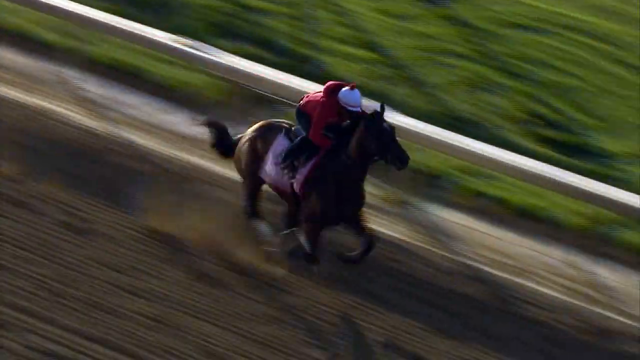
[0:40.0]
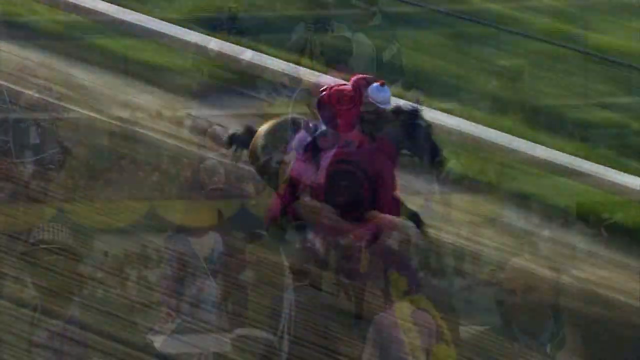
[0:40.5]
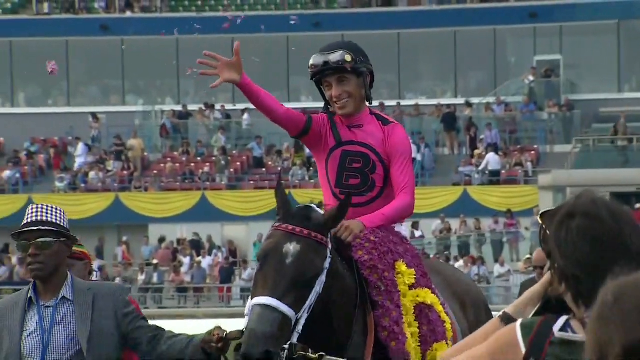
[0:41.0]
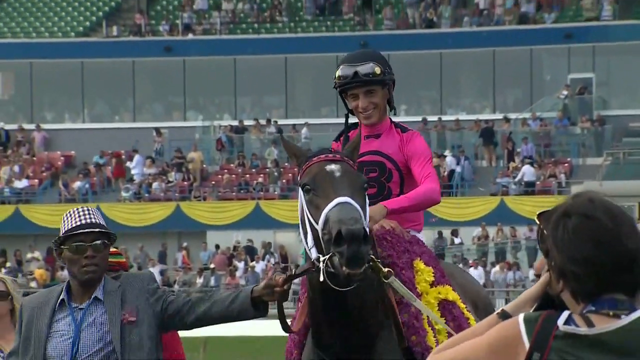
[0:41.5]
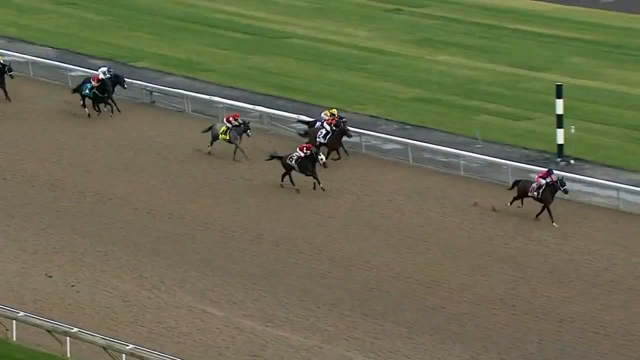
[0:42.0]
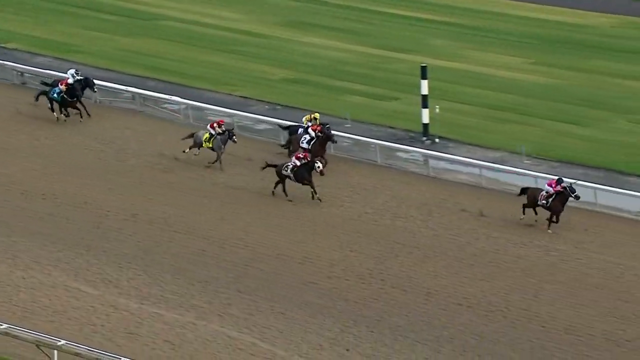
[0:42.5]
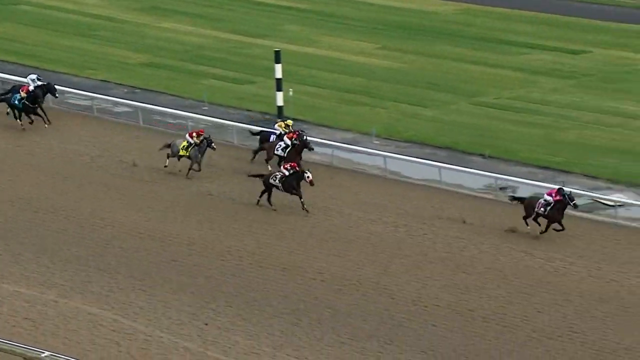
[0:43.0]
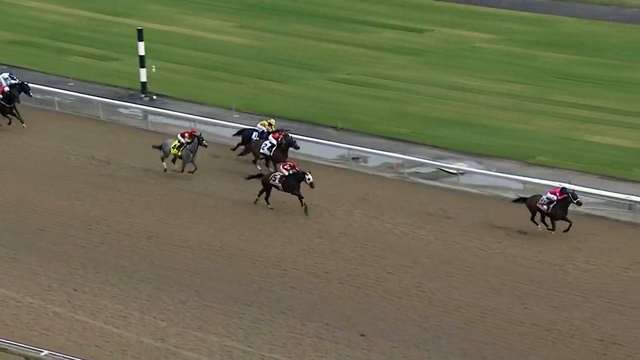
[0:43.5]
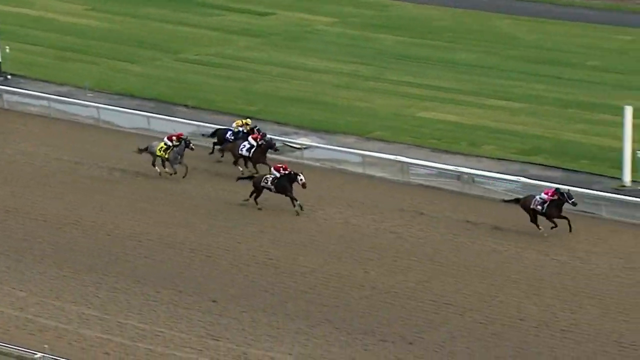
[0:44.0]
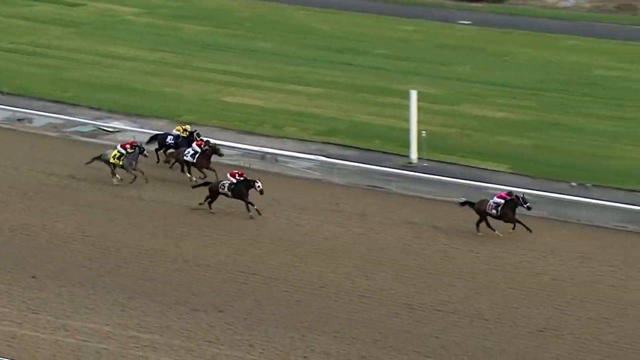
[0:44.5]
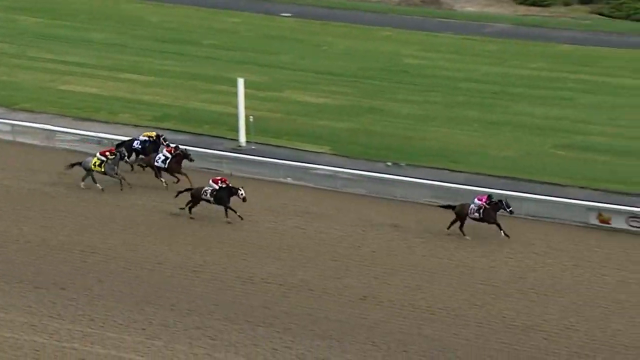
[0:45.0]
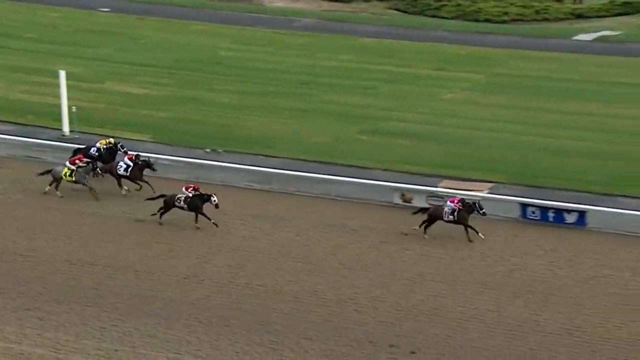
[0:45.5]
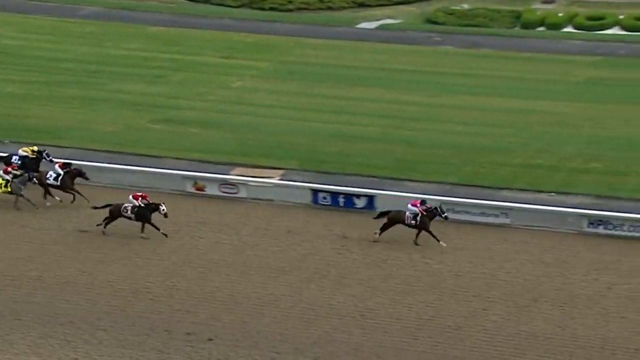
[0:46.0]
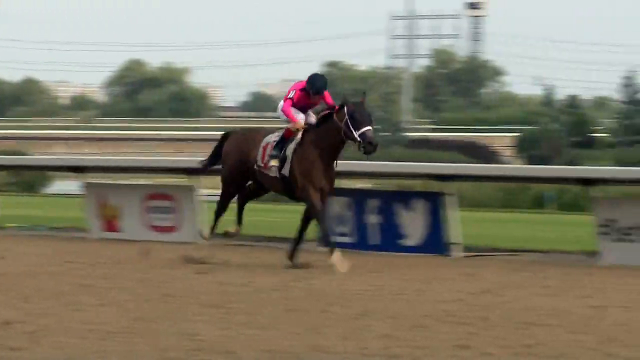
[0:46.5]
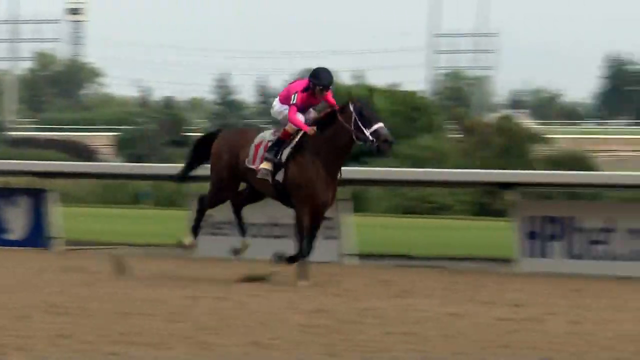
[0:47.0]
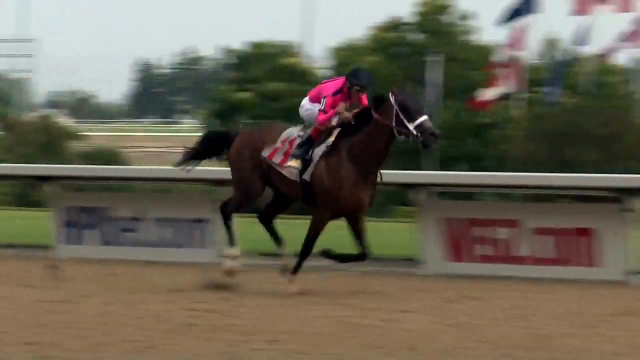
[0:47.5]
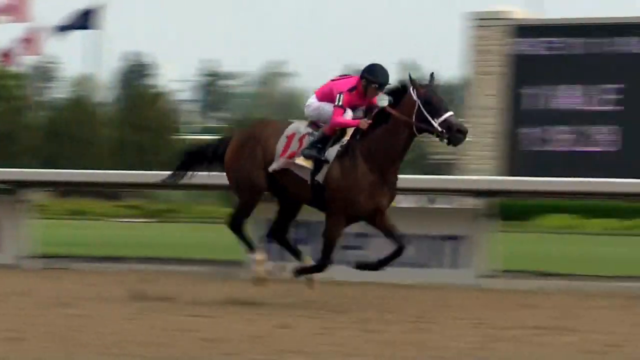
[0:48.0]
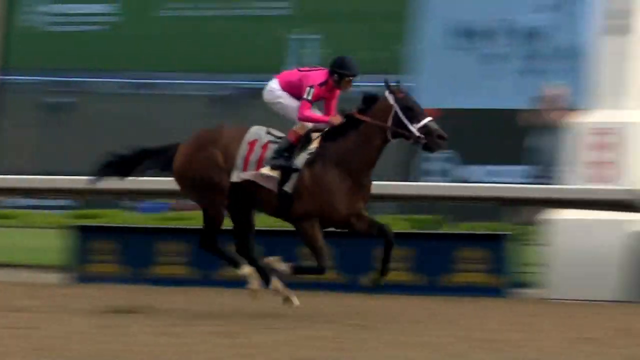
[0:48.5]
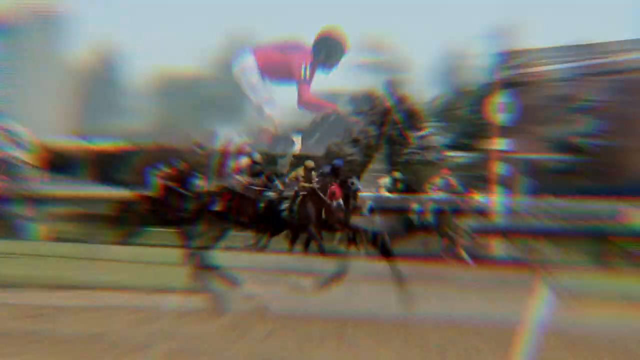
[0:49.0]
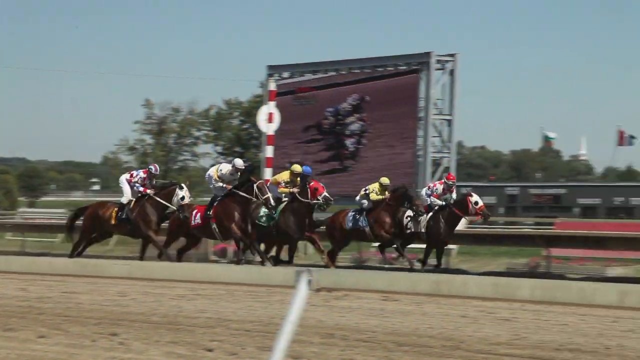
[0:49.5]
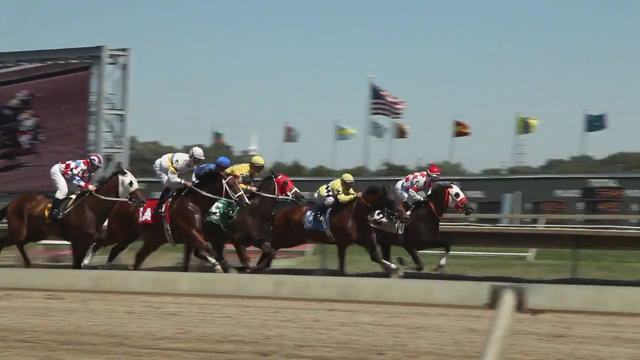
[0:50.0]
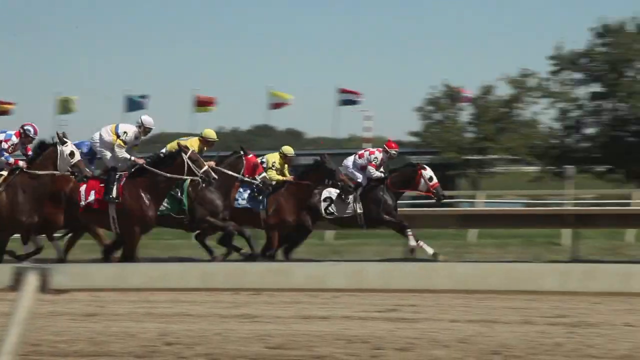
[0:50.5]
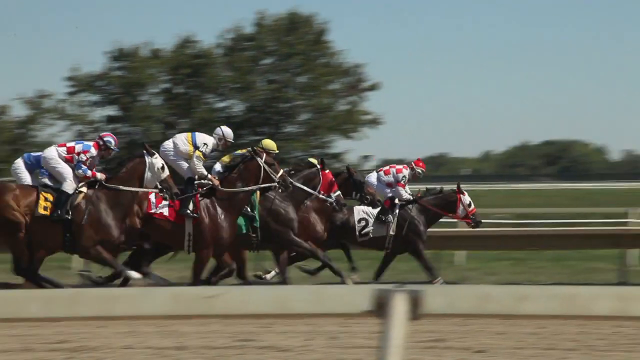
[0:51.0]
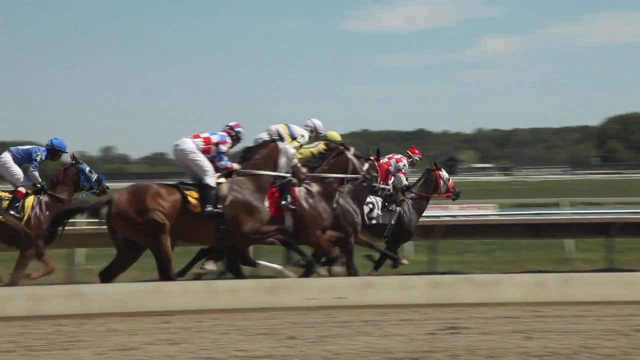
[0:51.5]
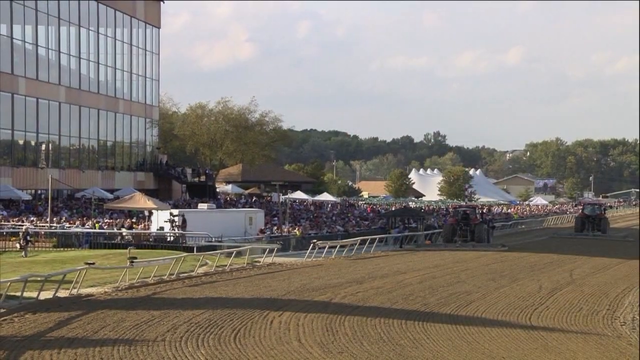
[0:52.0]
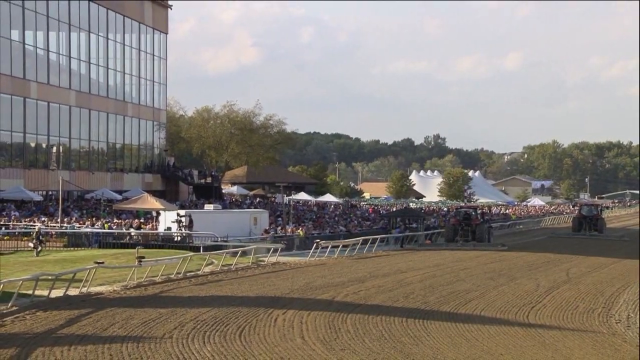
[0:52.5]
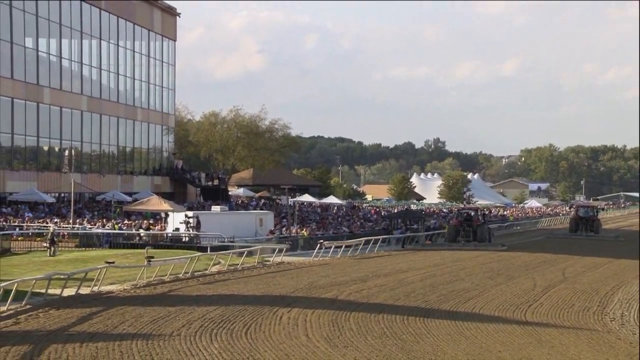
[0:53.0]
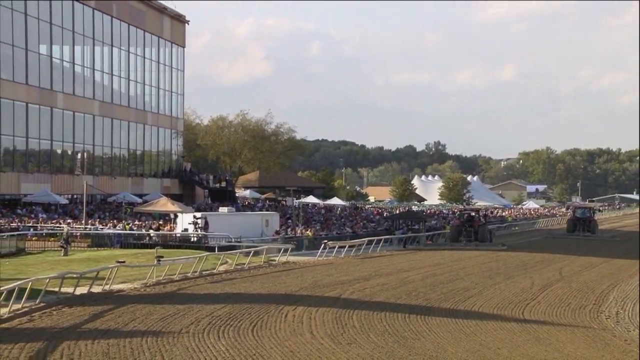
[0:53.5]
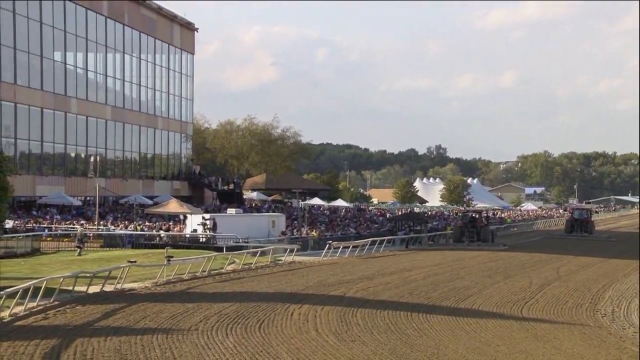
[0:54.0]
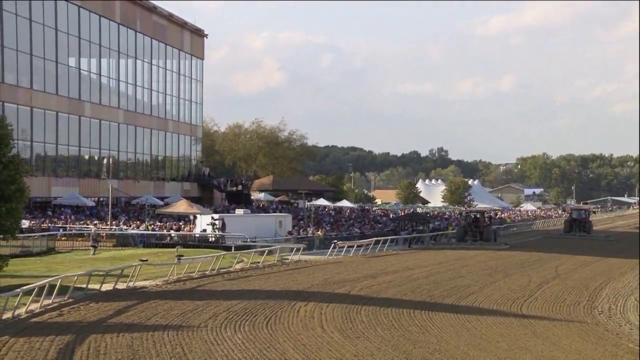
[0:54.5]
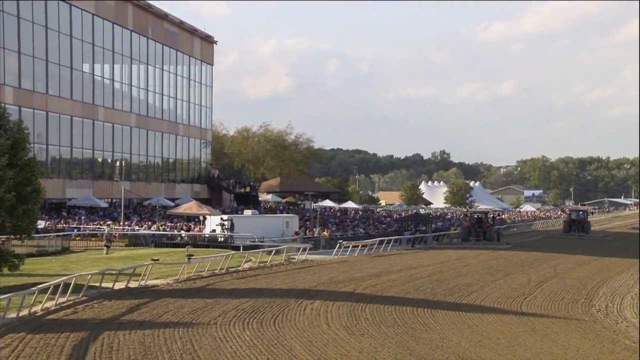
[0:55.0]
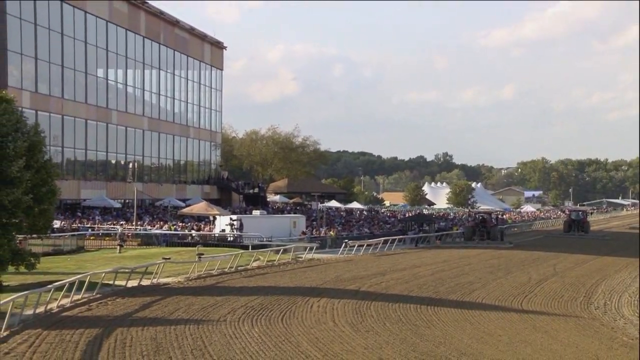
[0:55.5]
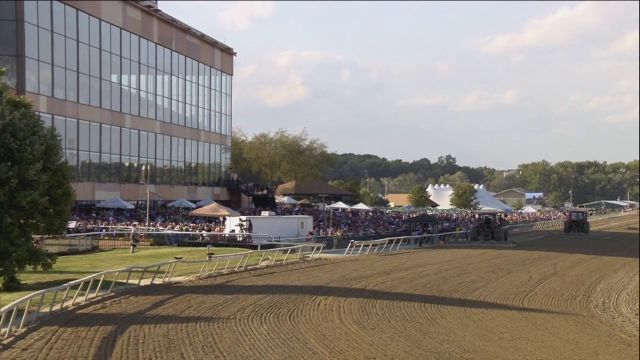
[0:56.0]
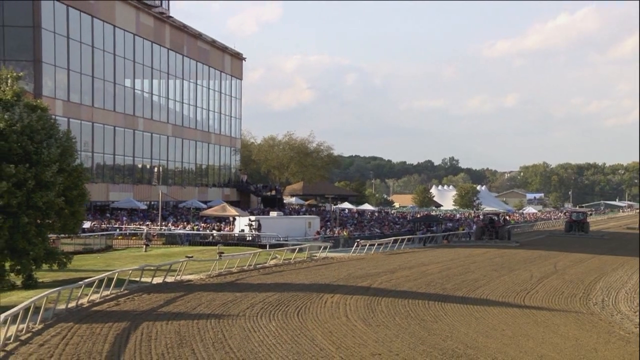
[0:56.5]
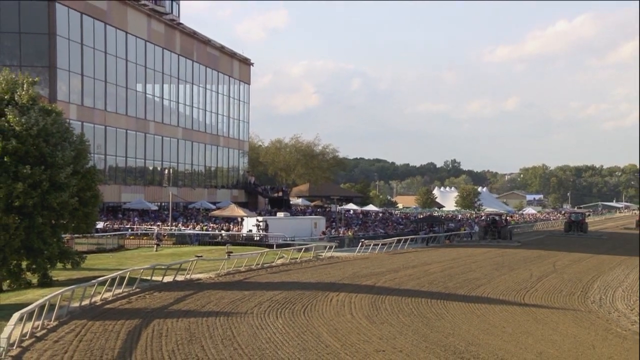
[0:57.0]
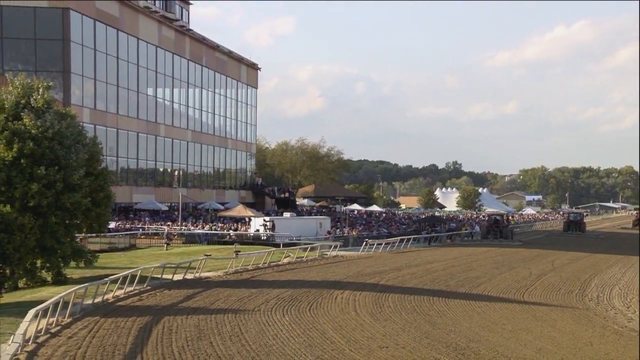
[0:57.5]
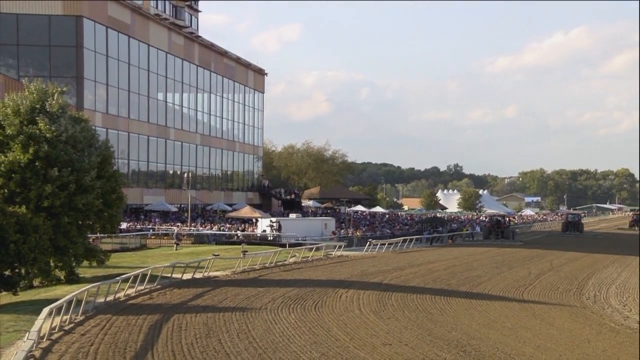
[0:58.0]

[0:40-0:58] What looks like a horse racing event continues, with many jockeys riding horses. One featured jockey wears bright pink clothing. A panned-out image shows the field the horses ride on, with a very large building with glass windows. At the end, the words "Bet Anywhere TBG" come onto the screen. The video appears to be advertising the betting company.